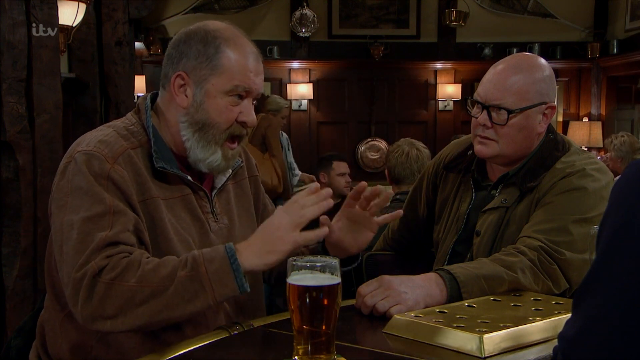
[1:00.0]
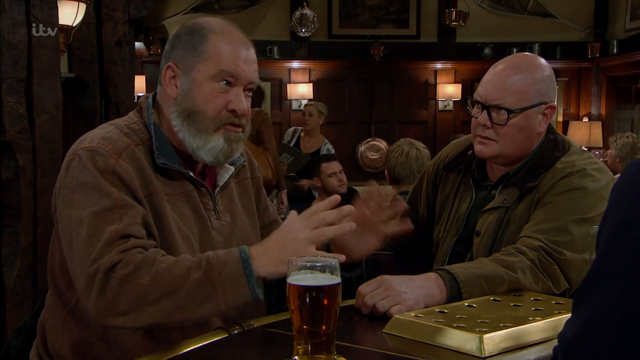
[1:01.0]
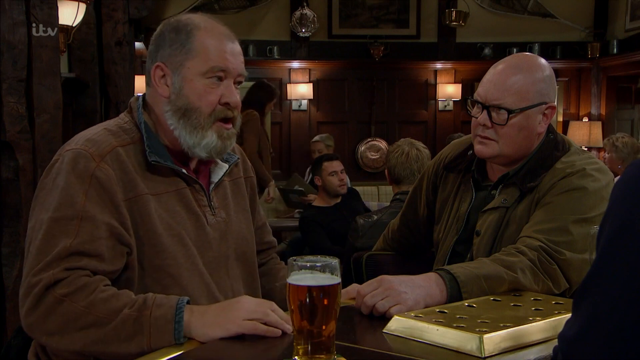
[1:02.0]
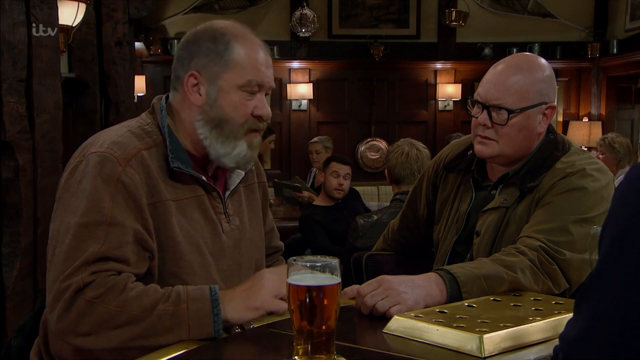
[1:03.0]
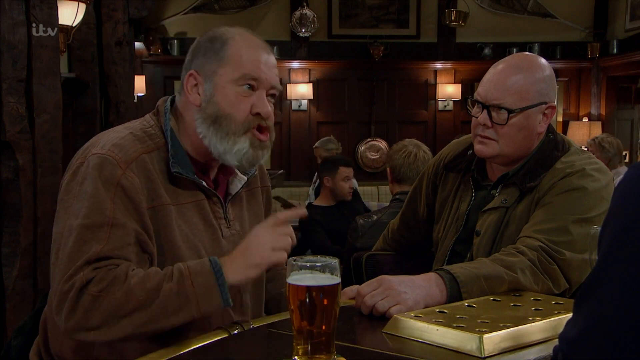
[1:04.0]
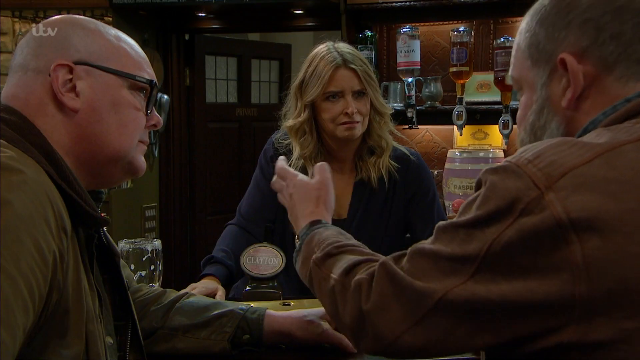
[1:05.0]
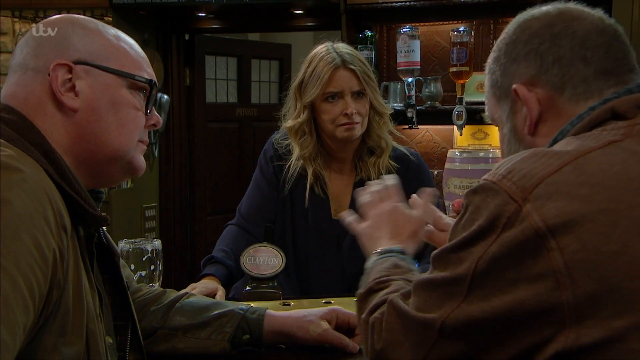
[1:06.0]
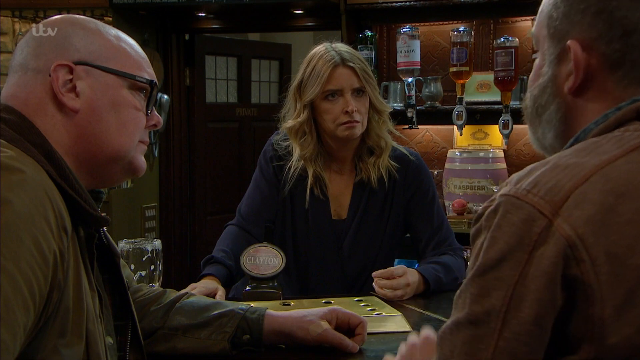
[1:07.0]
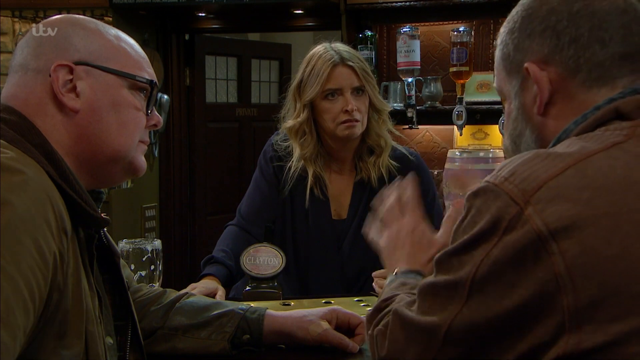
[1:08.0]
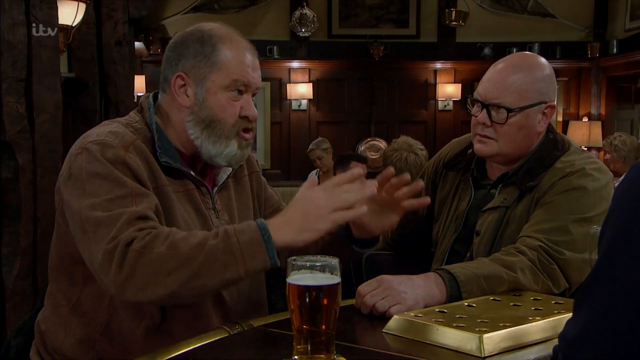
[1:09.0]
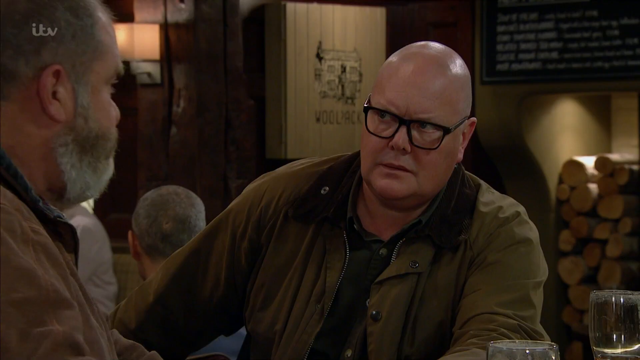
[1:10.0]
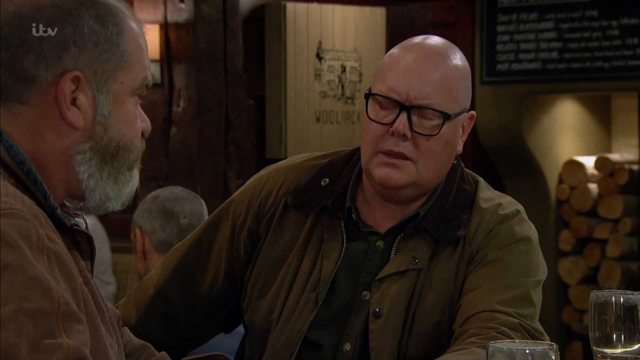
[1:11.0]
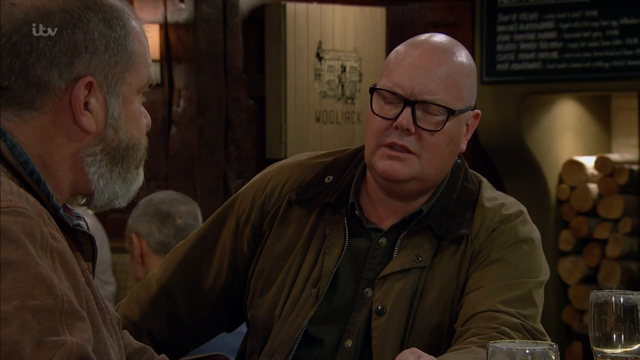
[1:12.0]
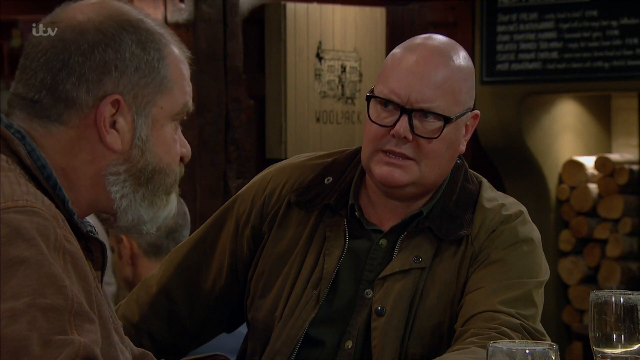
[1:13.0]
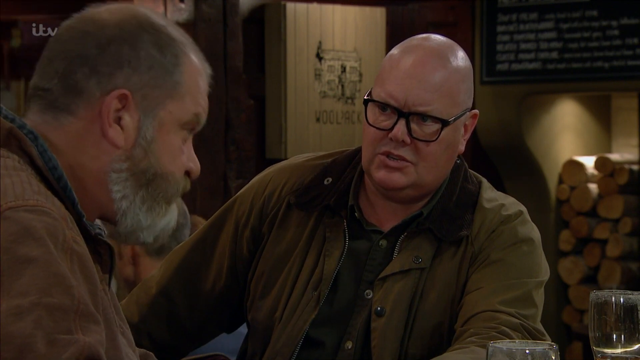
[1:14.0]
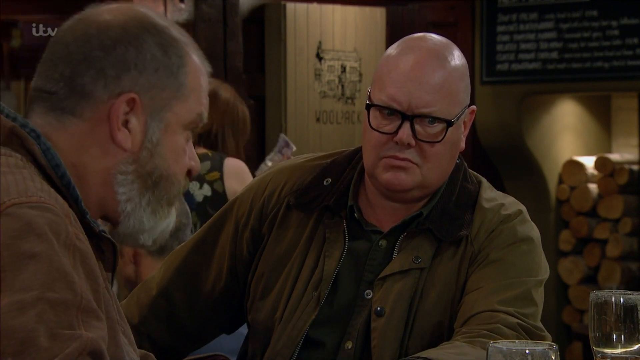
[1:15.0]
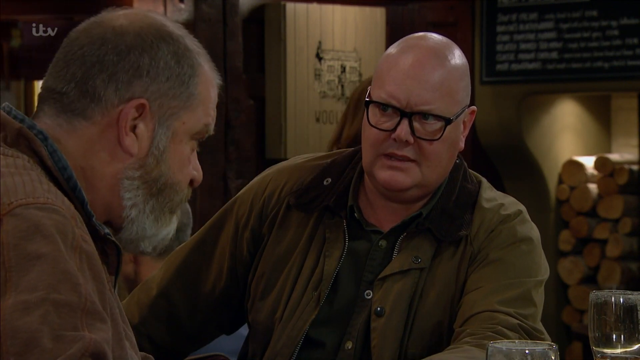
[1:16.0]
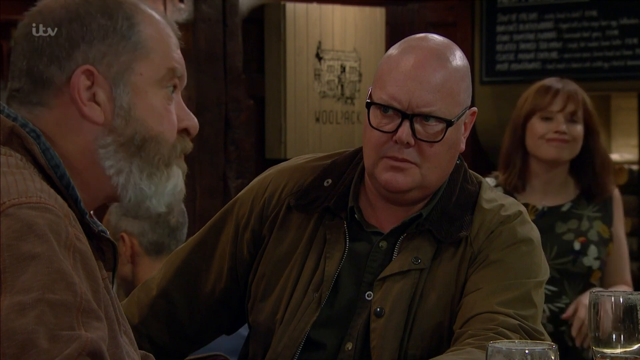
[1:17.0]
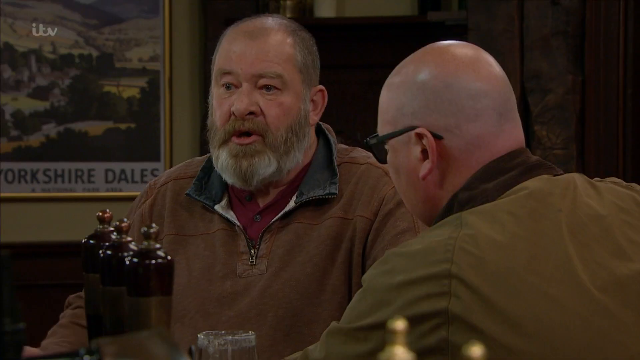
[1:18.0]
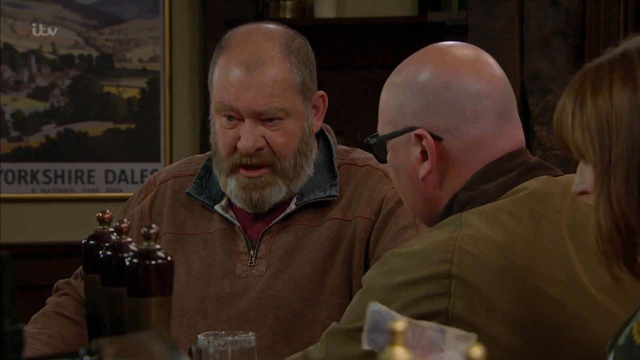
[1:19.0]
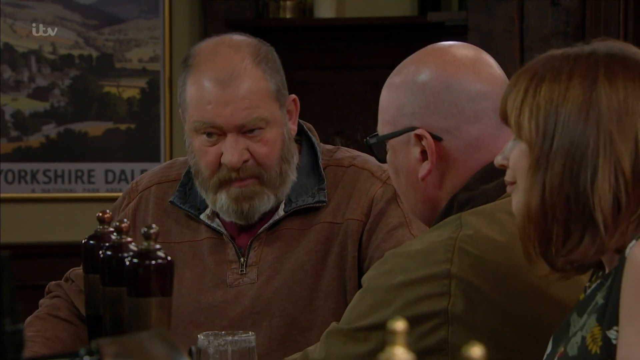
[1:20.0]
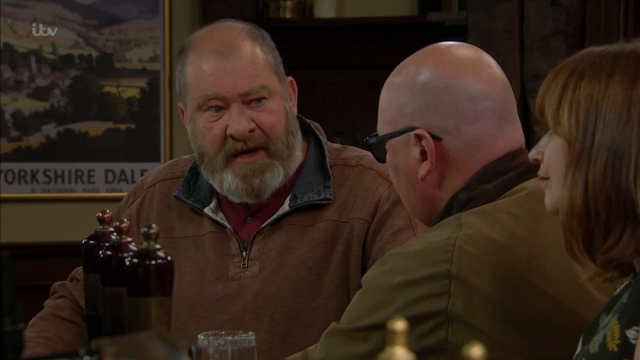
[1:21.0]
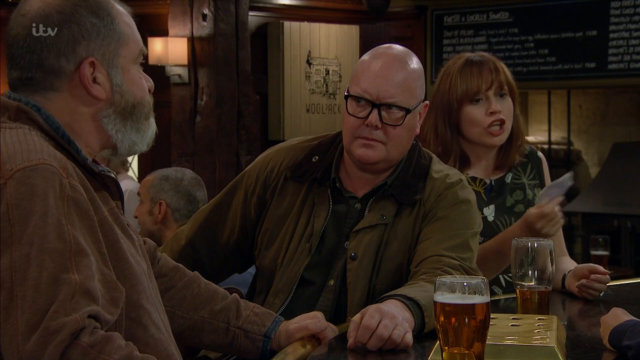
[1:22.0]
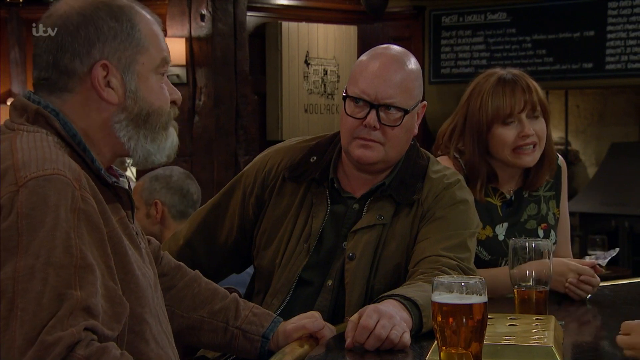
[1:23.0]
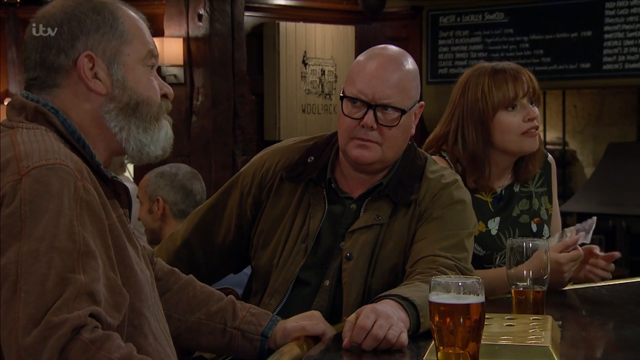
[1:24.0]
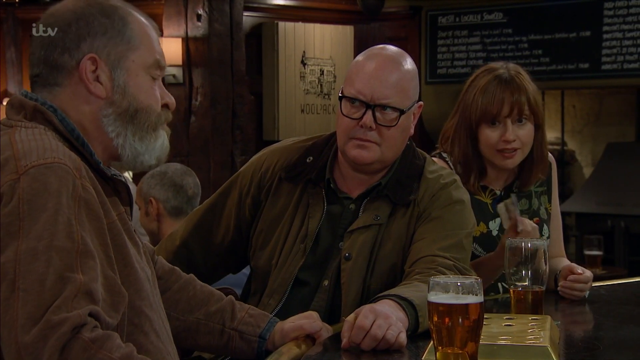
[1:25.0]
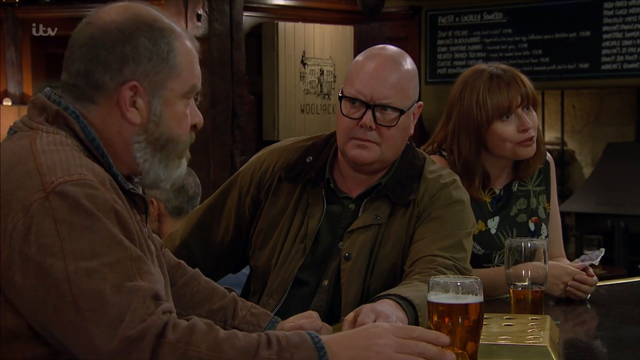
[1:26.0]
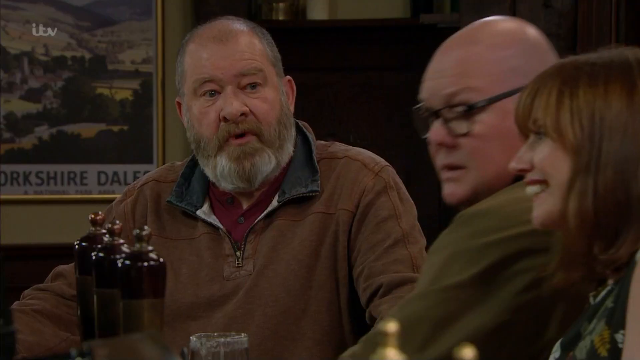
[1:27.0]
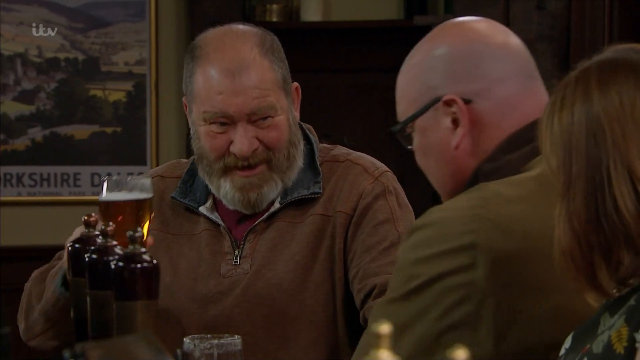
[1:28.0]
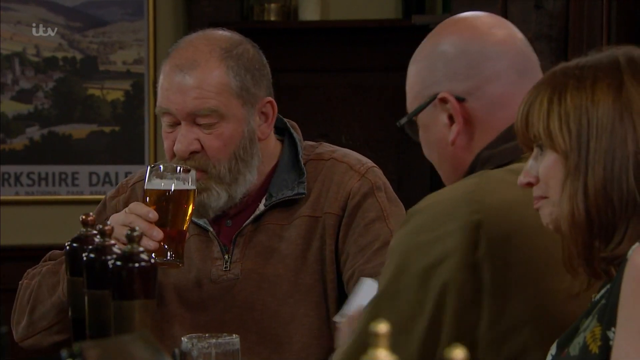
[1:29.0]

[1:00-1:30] The two men are sitting at the bar. The man on the left side of the screen, wearing a light brown leather jacket, has his palms raised in the air with his fingers spread out. The man on the right side of the screen, in a green jacket and with a bald head, looks up toward him. A full pint of beer is sitting on the bar in front of them. The man in the brown leather jacket places his palms on the bar, then raises his right hand and points his index finger at the sky as he talks. The view changes to behind them, showing the female bartender in a long-sleeved blue shirt looking at the man talking, who moves his hands up and down as he continues speaking. The camera then looks at the bald man with the glasses. He takes a deep breath as he is about to respond, his eyes closed as he begins speaking. He opens his eyes, shakes his head sideways and continues speaking. A woman in a blue and floral dress approaches them from behind. The scene changes to the man in the brown leather jacket responding, his head tilted slightly down as he looks back at the bald man speaking. The woman in the blue and floral dress approaches the bar holding cash in both hands and talks to the bartender off screen. Then, holding the cash in just her right hand, she motions it toward the bald man sitting beside her, smiling as she talks to the bartender. The man in the brown leather jacket raises his beer in his right hand and gives a cheers motion as he takes a sip.